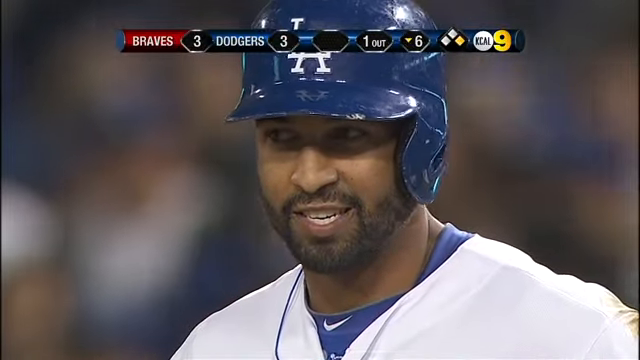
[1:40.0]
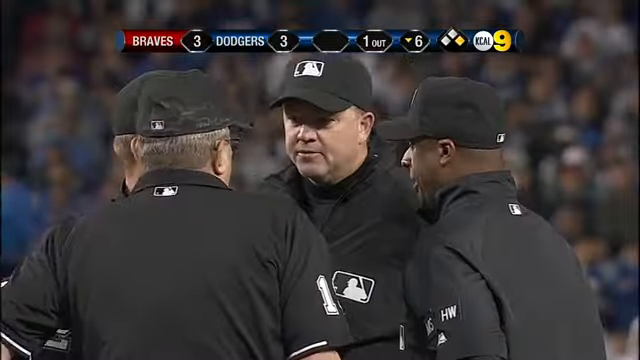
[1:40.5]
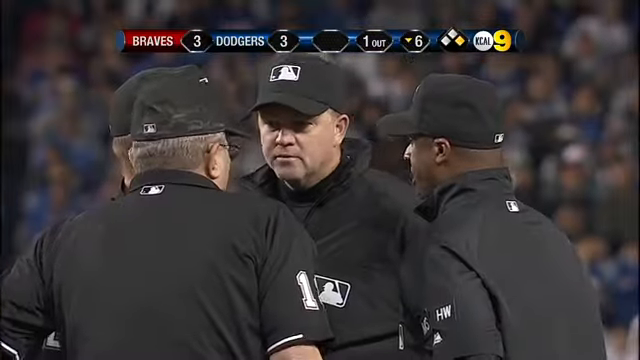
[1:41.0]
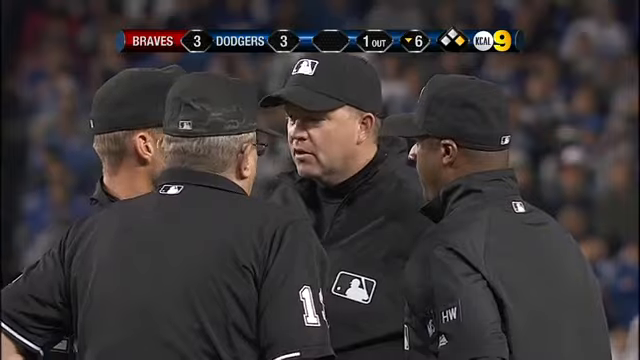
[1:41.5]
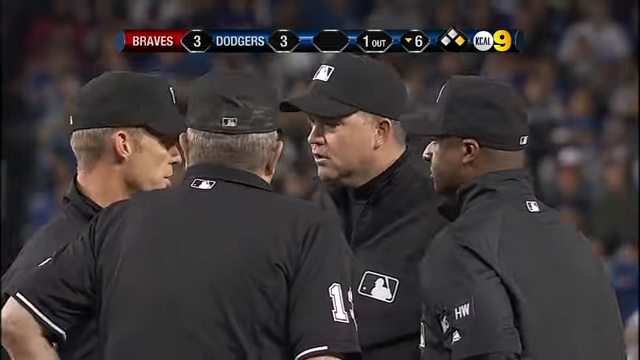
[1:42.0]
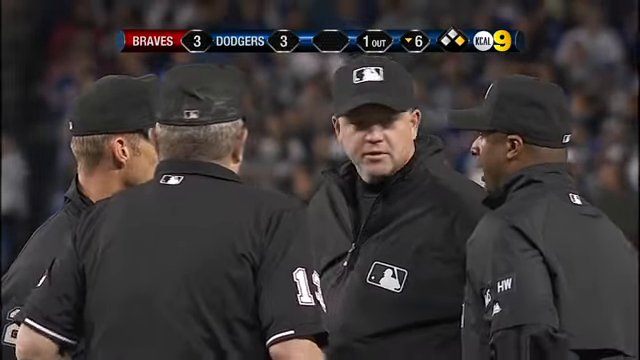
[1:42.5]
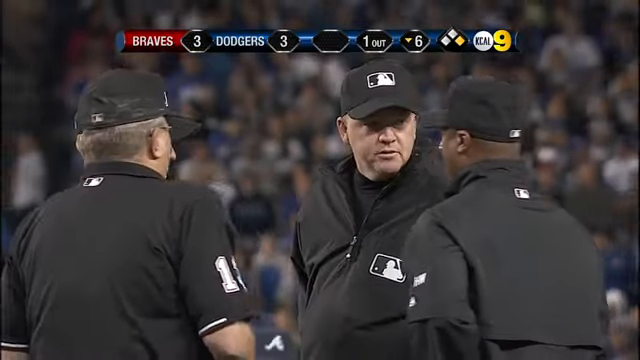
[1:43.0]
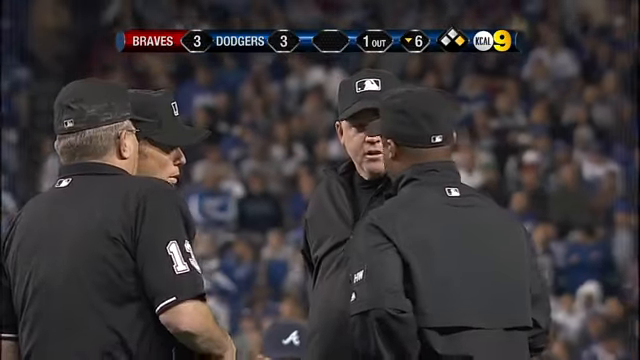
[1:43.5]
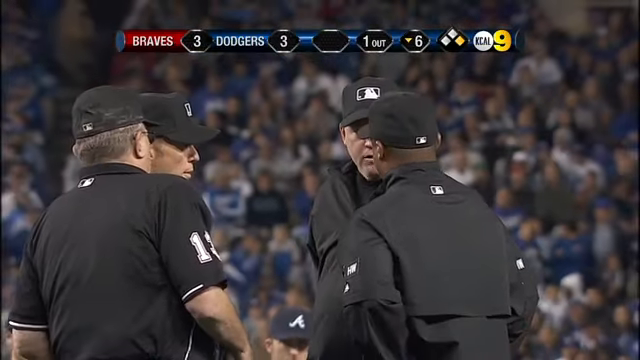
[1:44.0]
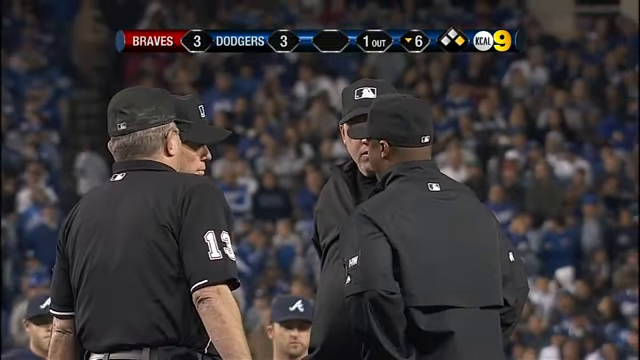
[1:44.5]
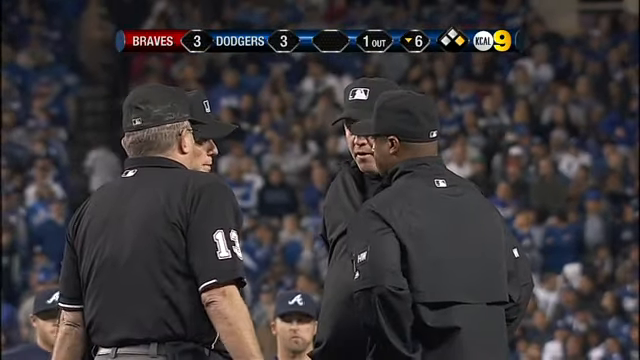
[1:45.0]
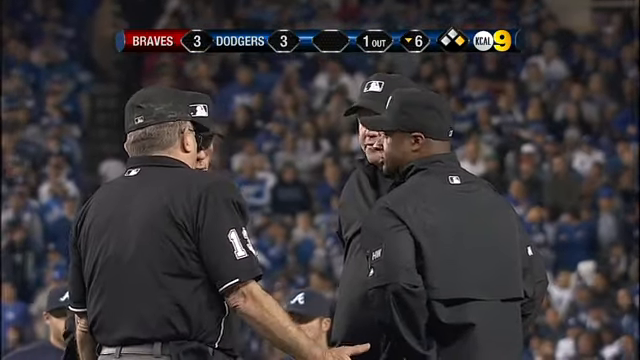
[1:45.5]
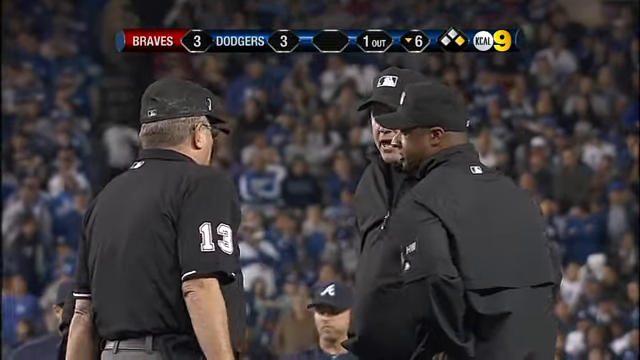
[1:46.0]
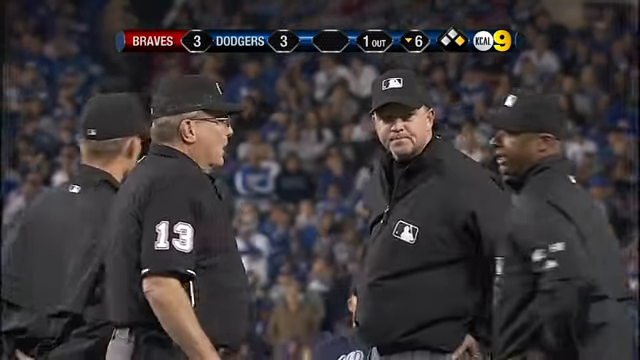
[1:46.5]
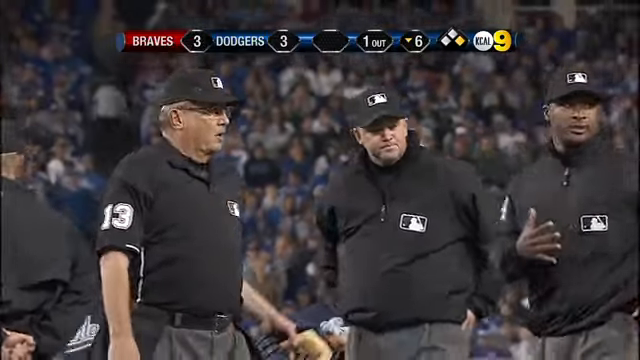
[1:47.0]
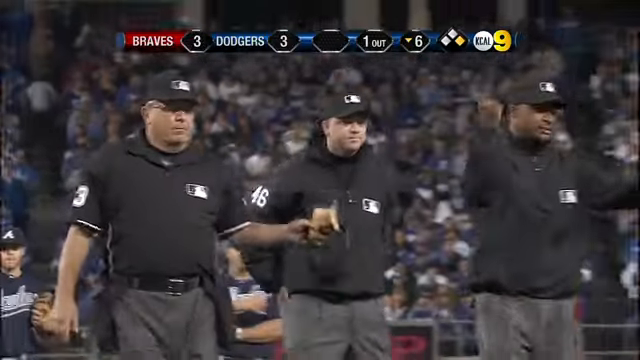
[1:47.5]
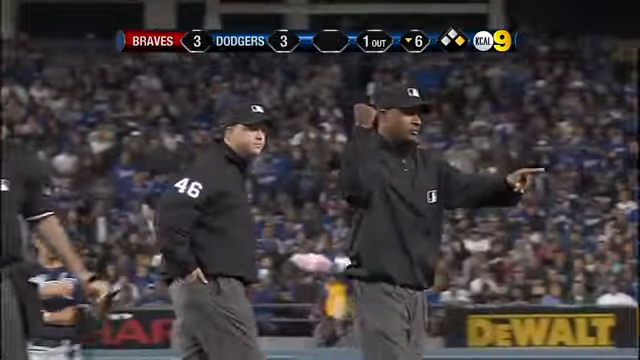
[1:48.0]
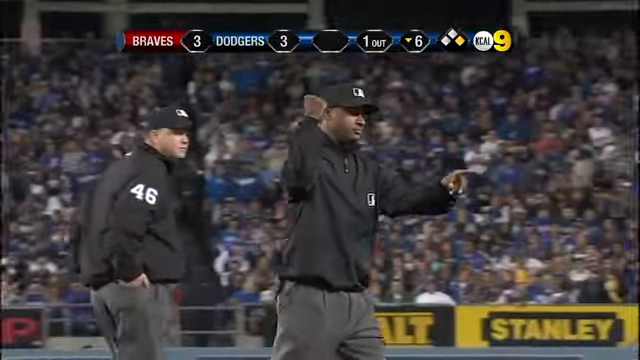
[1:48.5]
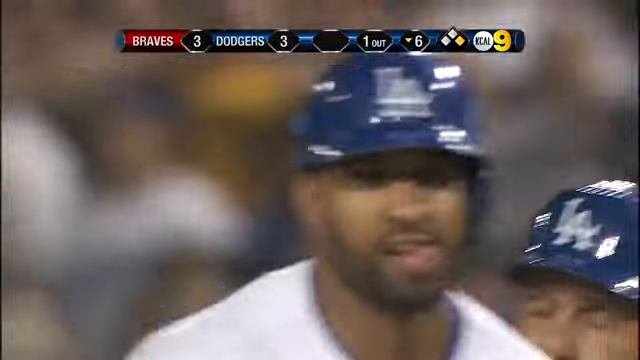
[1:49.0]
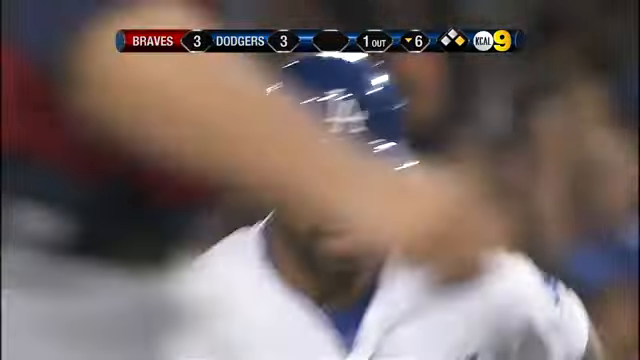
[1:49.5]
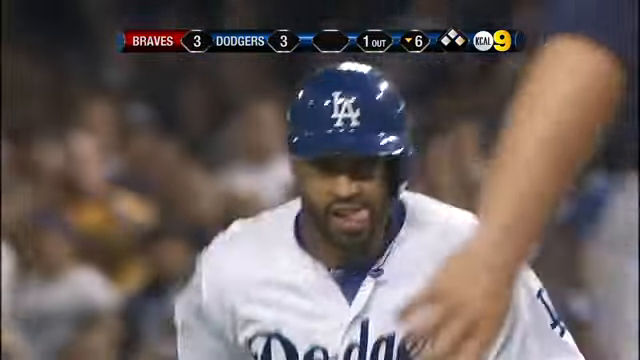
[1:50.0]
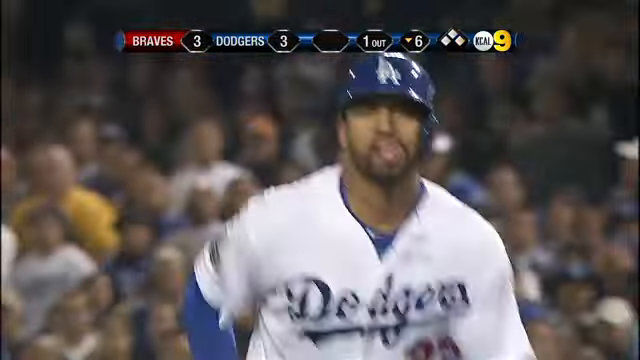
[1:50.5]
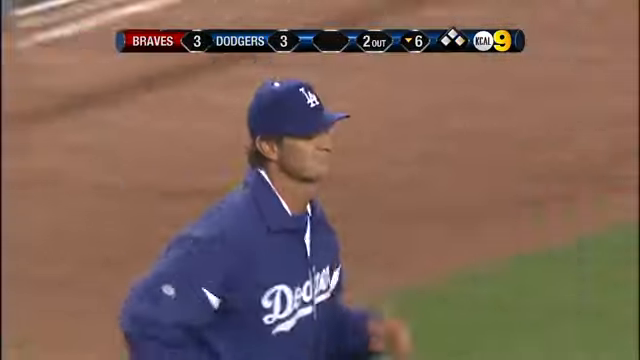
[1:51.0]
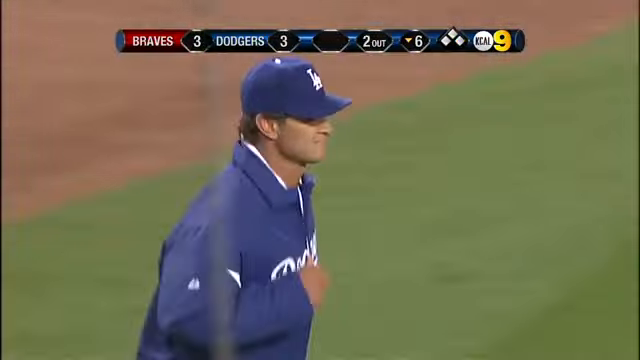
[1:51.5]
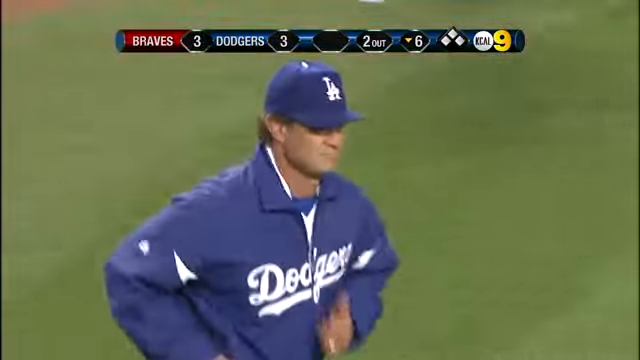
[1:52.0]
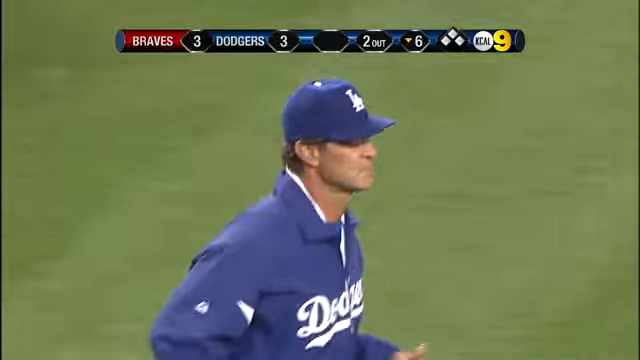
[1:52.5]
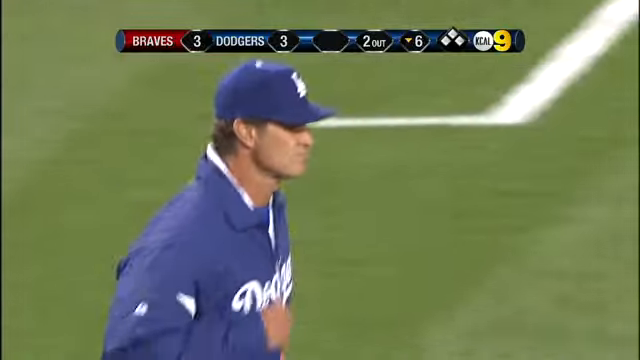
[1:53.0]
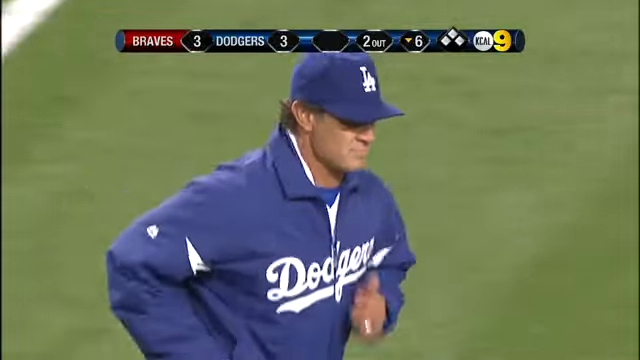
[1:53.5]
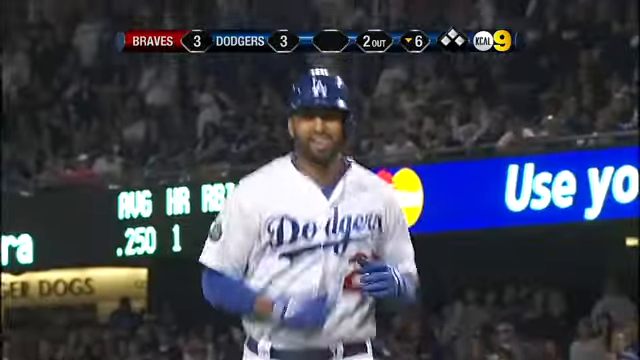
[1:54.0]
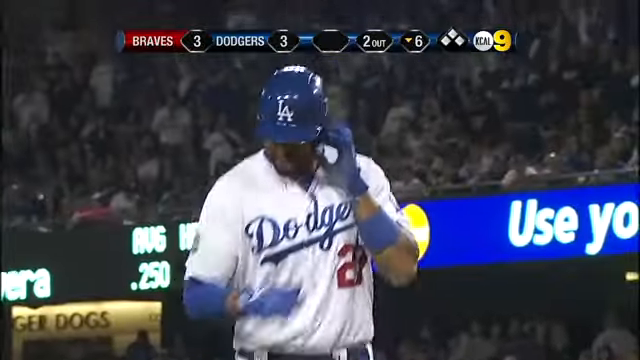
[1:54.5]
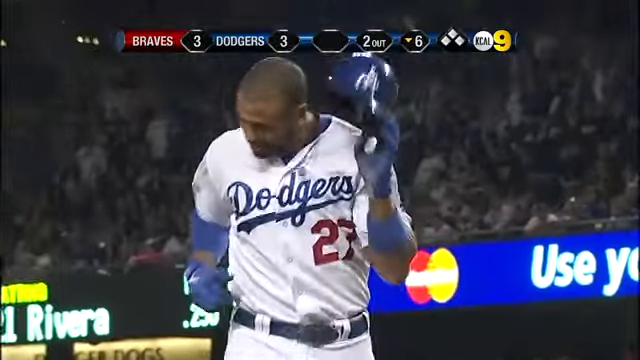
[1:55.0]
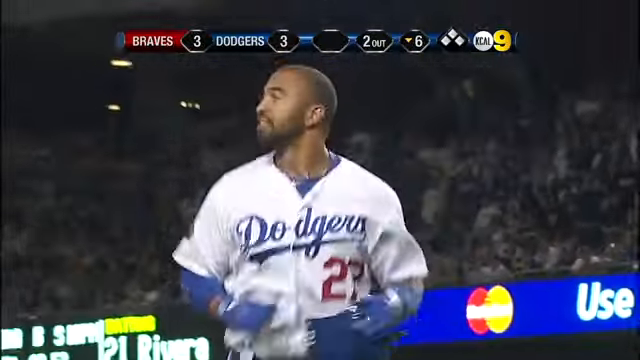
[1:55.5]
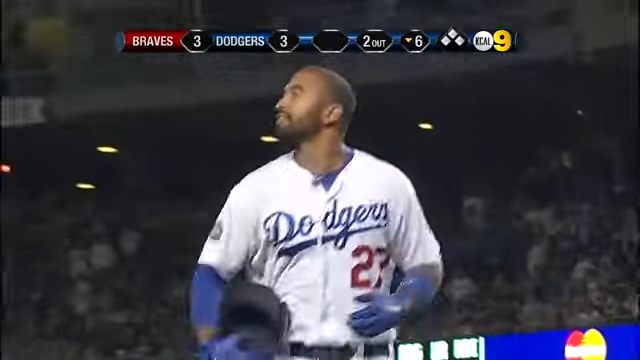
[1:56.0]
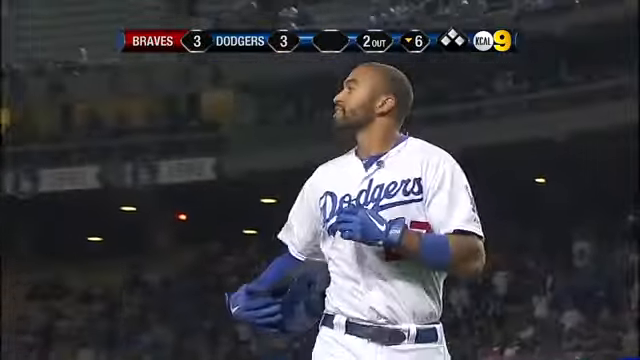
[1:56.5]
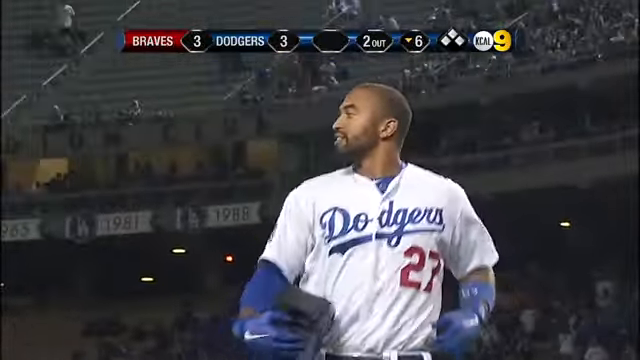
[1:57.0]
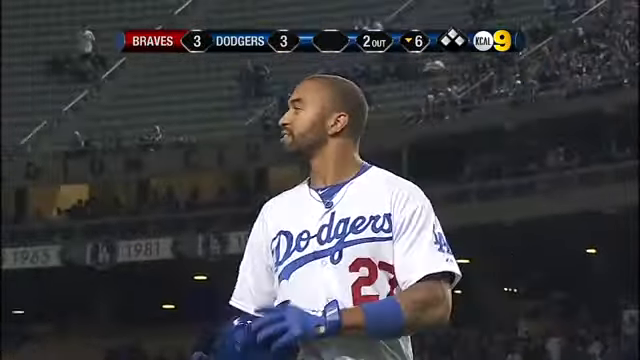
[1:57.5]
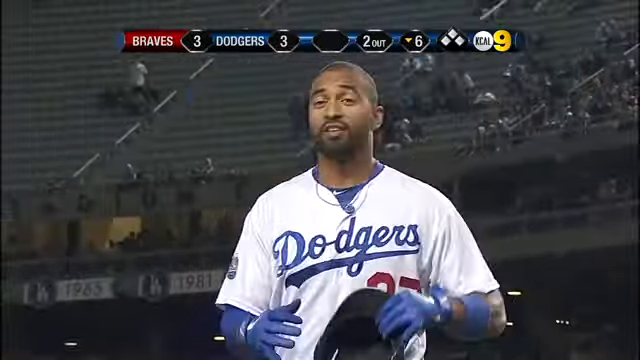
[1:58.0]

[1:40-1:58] In a broadcast of an MLB game, the score at the top shows Braves versus Dodgers at 3-3, apparently one out, the bottom of the sixth, and a player on first base, broadcast by KCAL 9. Below, in the main view, a blurred crowd fills the background while four refs in the middle form kind of a diamond shape, the first man on the left looking toward about one o'clock. They wear long-sleeve black coats with a white number on the right sleeve, on those that are visible, and black baseball caps with a white silhouette of a baseball player on the front. They seem to be discussing a play. The man in the lower right is Black, and the rest are older white men; the man in the lower left wears glasses. The group breaks up and walks off to the left. The camera then zooms in on a Dodgers player, seen from the waist up, running toward the camera.